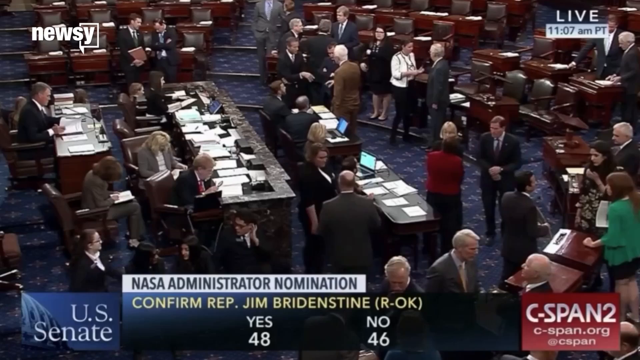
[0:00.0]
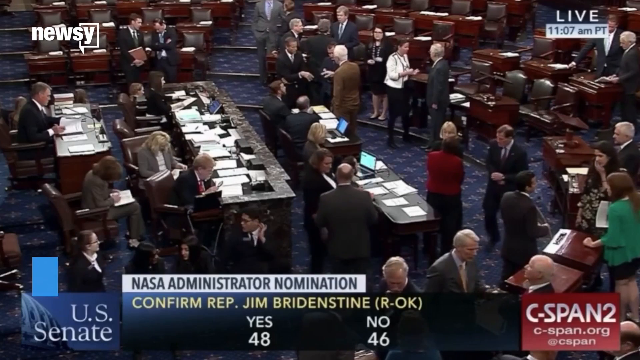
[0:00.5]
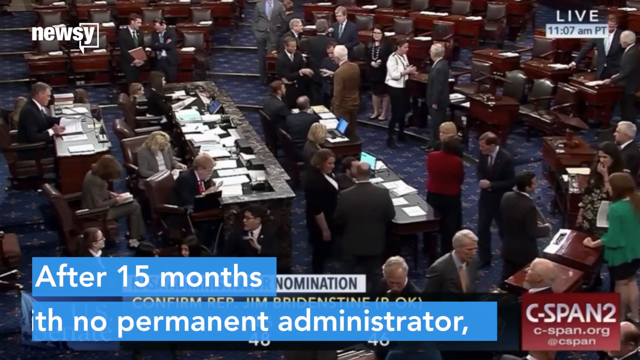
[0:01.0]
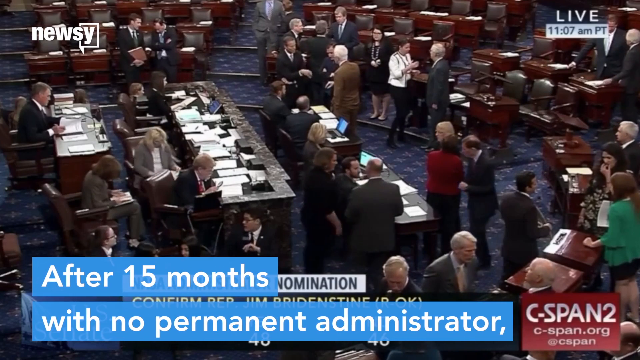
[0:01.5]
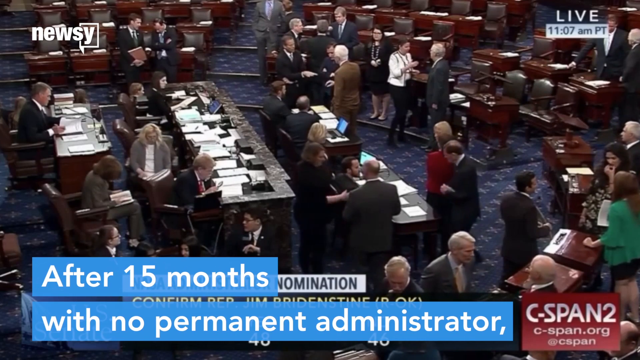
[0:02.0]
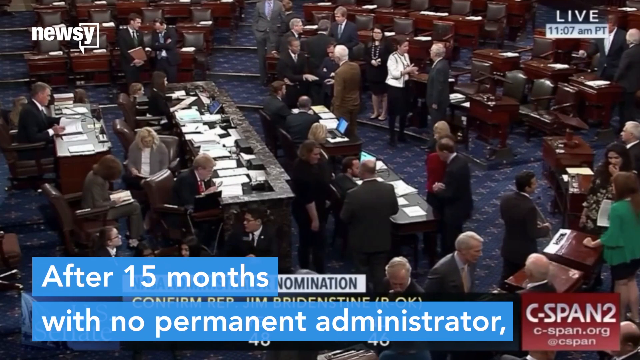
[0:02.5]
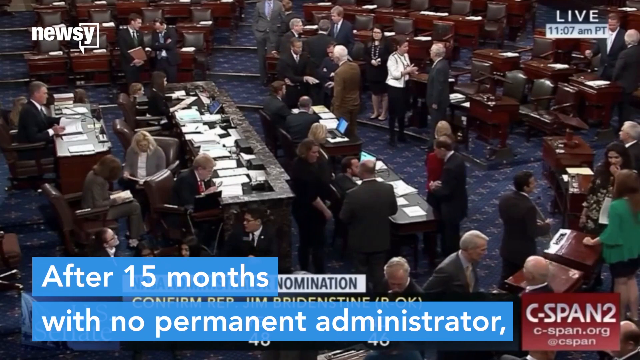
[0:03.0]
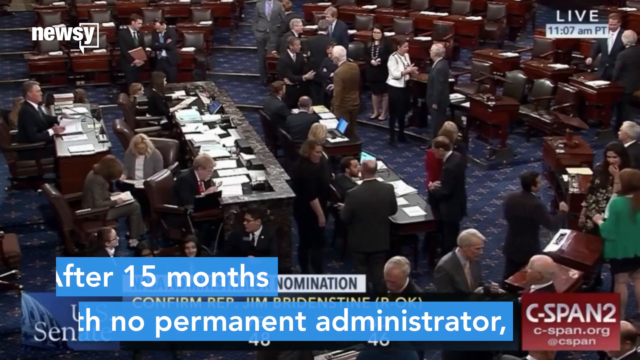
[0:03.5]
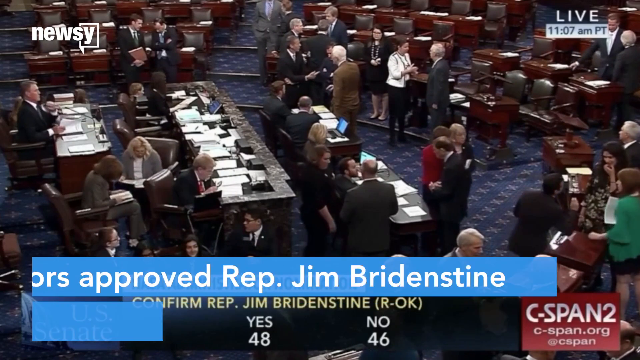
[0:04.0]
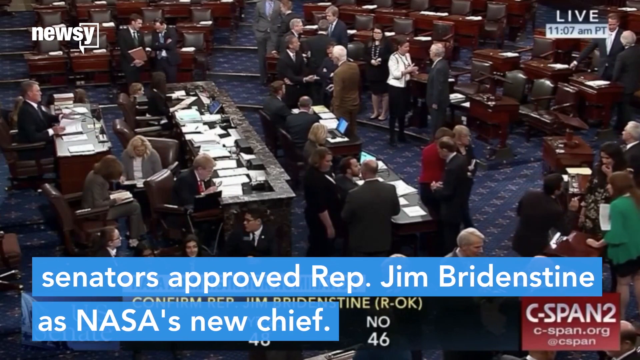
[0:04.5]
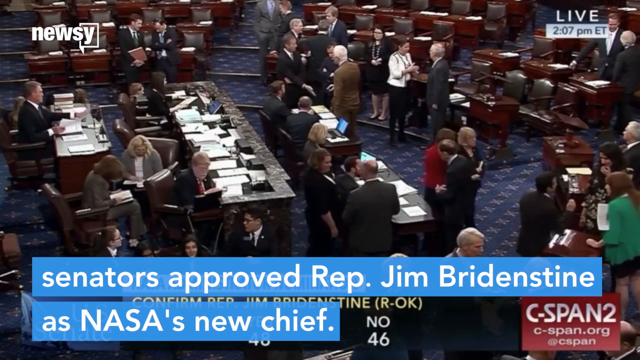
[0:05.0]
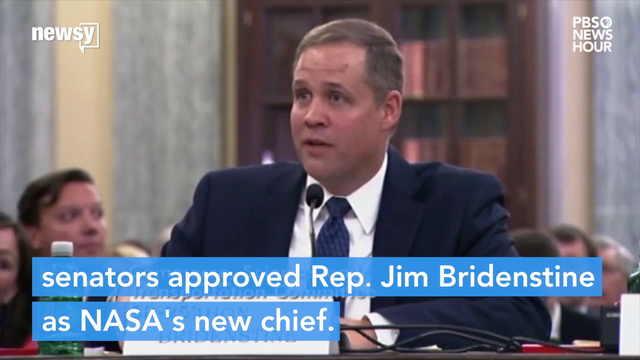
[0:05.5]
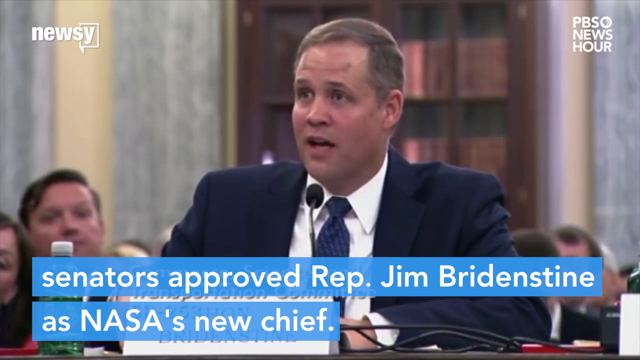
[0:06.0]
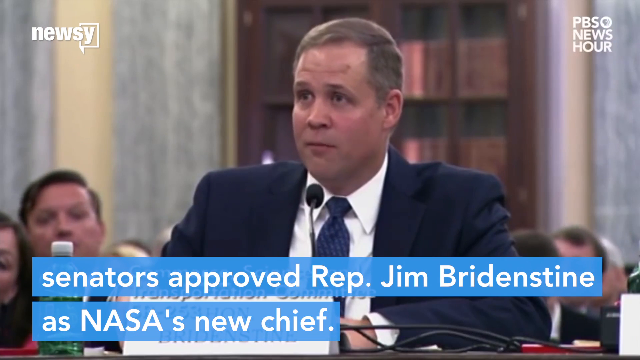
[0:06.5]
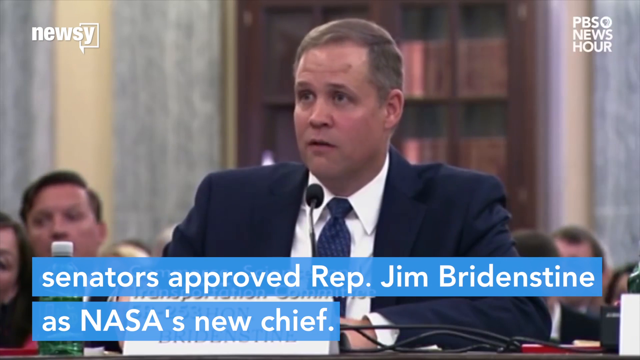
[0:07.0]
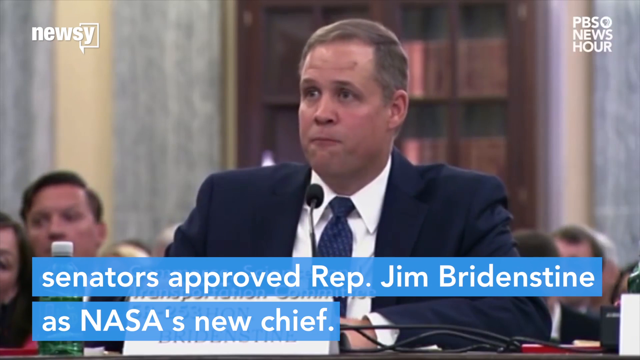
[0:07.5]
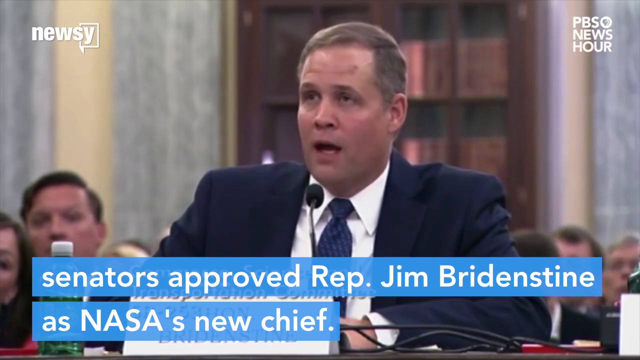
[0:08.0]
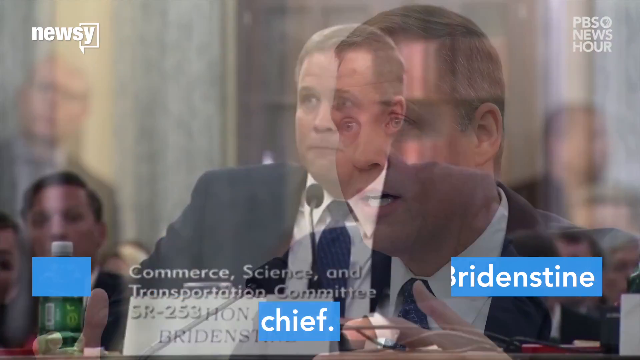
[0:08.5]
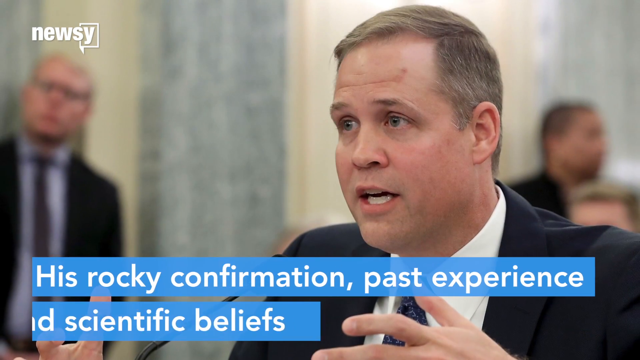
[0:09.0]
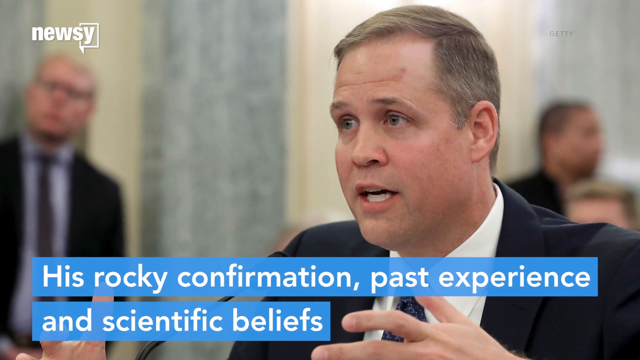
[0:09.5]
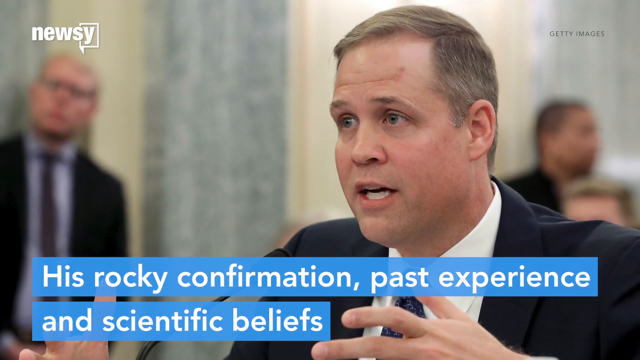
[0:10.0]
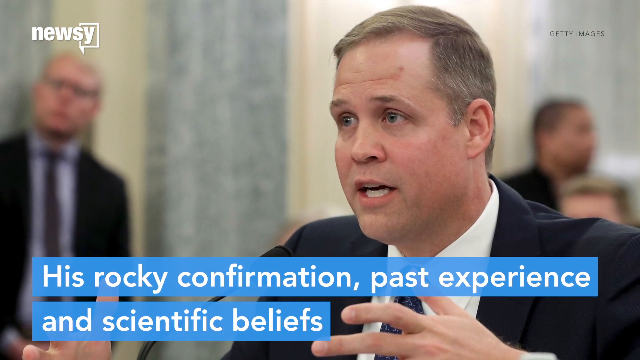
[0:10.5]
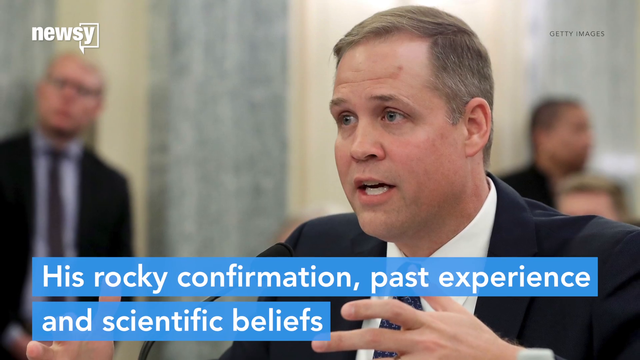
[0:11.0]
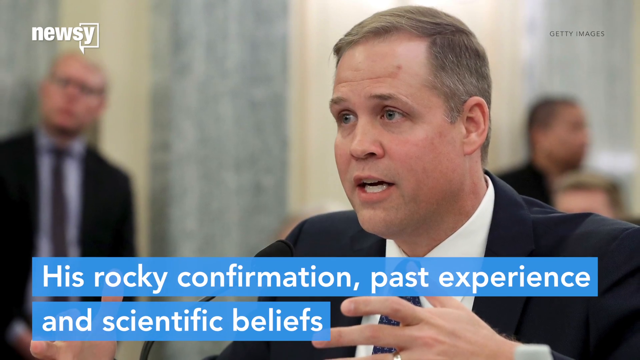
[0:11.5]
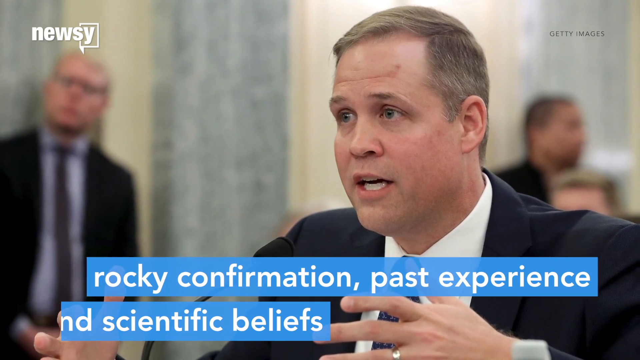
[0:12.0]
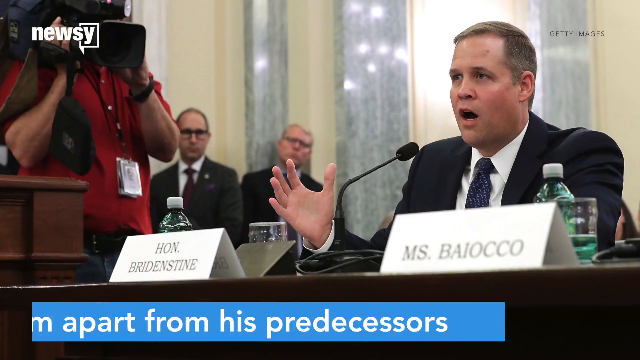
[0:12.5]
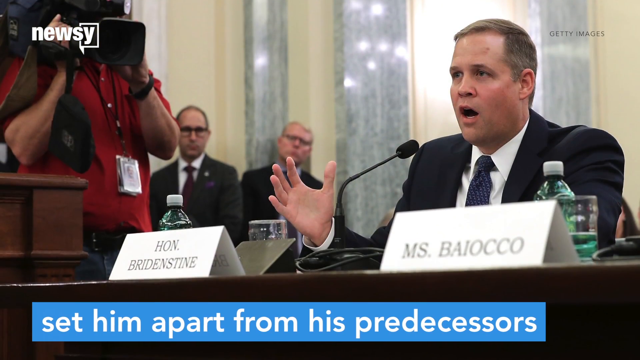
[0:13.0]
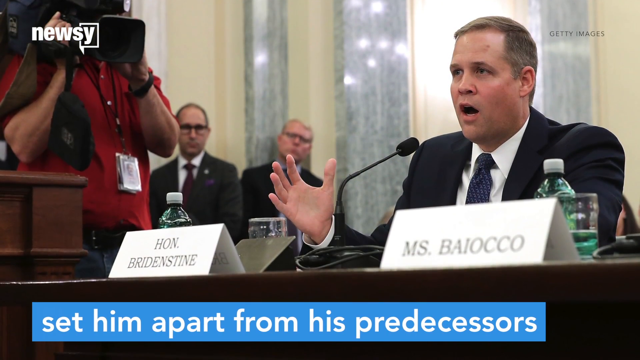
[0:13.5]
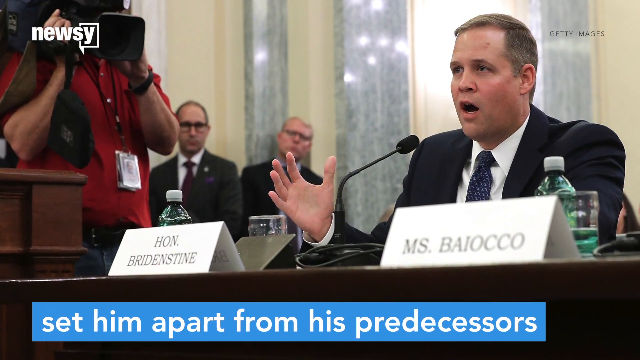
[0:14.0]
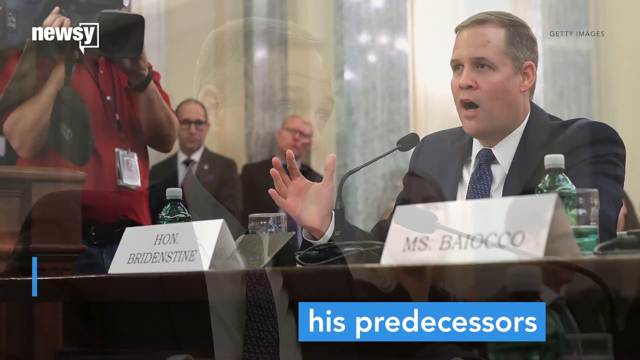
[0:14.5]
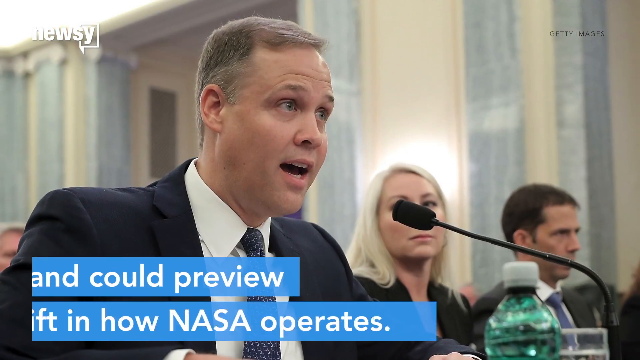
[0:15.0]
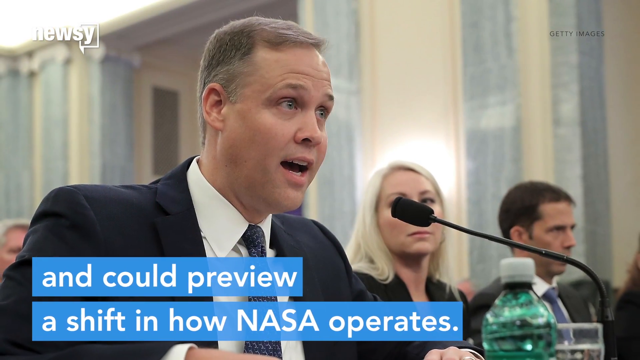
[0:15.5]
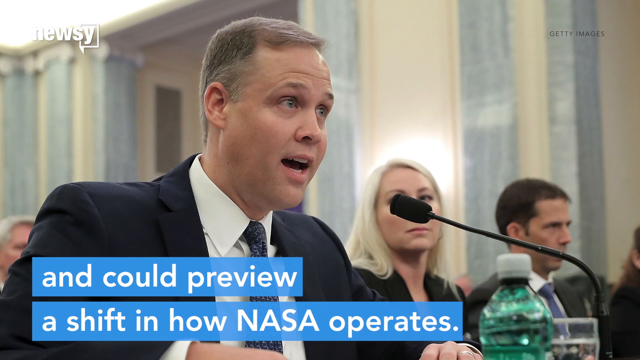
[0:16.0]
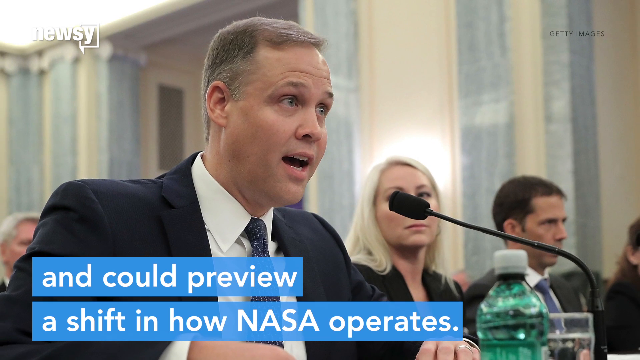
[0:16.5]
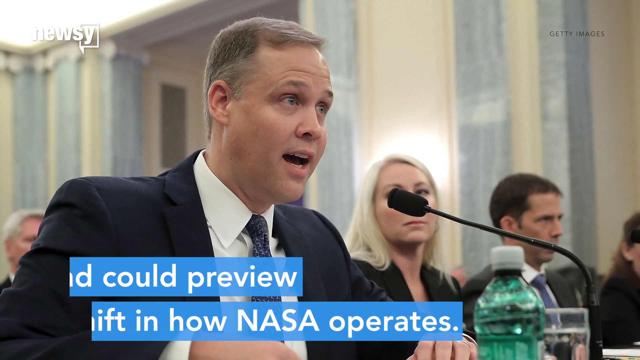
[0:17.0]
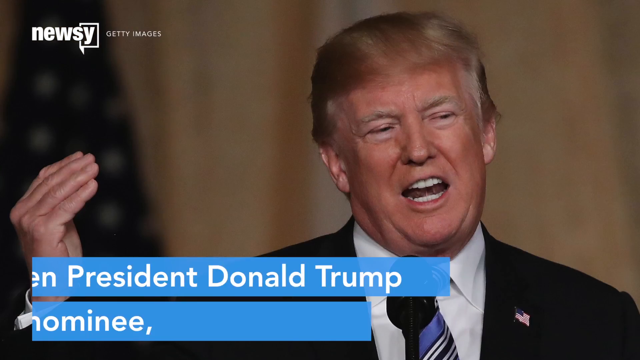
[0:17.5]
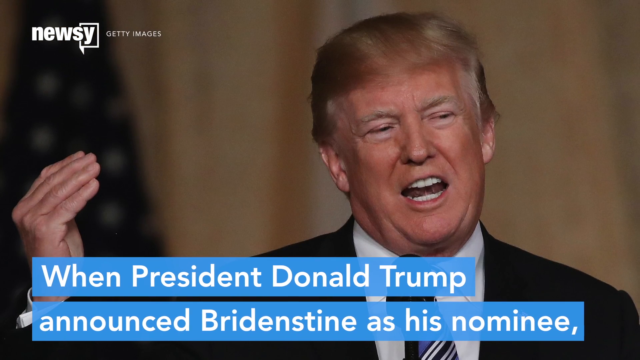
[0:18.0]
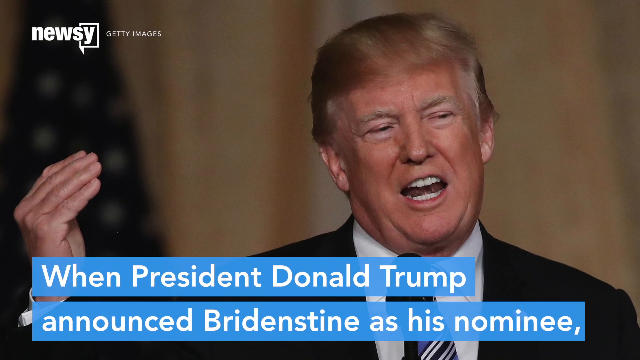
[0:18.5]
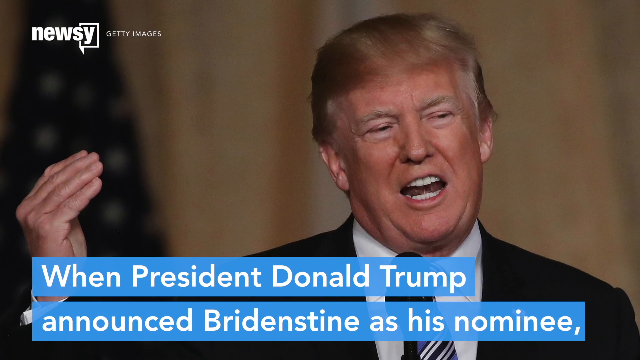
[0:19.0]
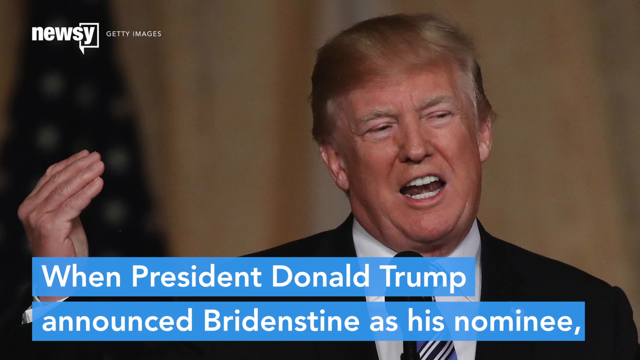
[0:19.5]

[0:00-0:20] Multiple people are inside a room with a blue floor that looks like a mat. The room is packed with white people wearing suits of different colors, and it is filled with chairs and tables; most of the tables are brown, with black chairs. At the front center is a long table with three chairs, and behind it is a shorter table with a single chair. The people seem to be moving around and talking. A white man with brown hair, wearing a blue suit, a white shirt and a blue tie, talks into a mic, and he is shown repeatedly from different angles. Text at the bottom reads "confirmation past experience and scientific." The same man is then shown with different writing. President Donald Trump then appears.